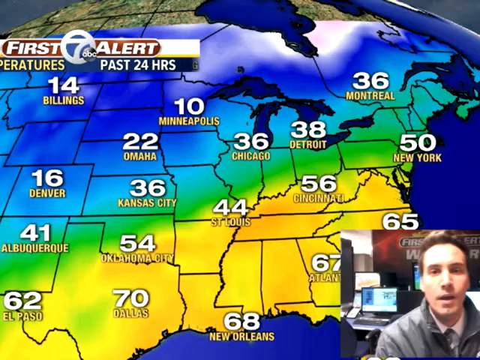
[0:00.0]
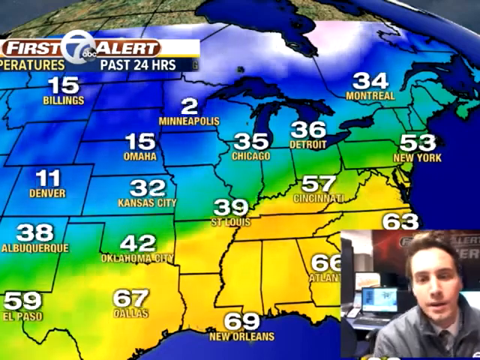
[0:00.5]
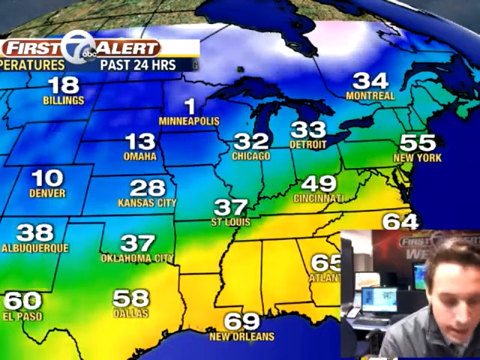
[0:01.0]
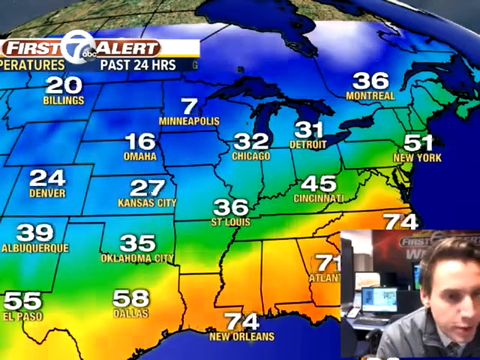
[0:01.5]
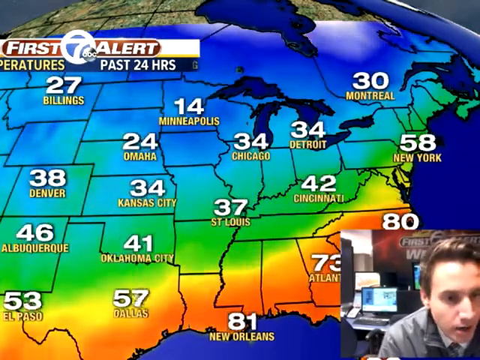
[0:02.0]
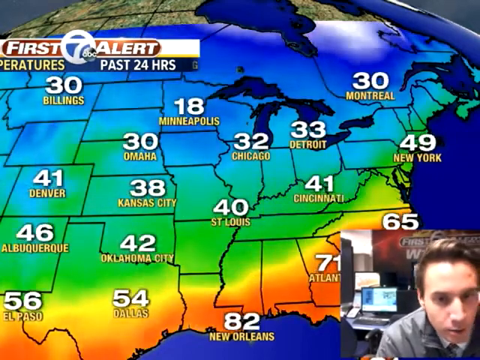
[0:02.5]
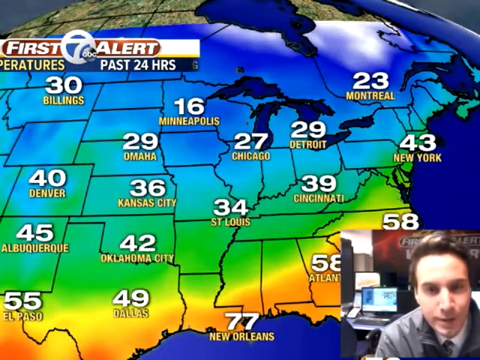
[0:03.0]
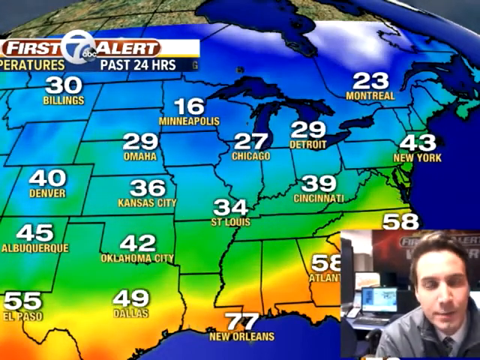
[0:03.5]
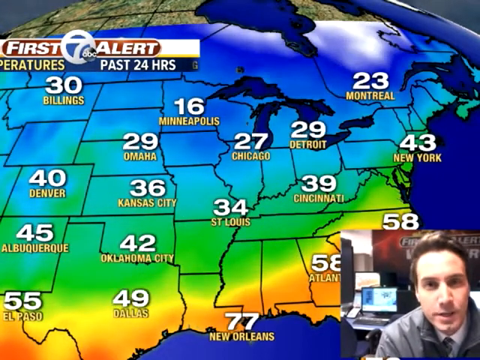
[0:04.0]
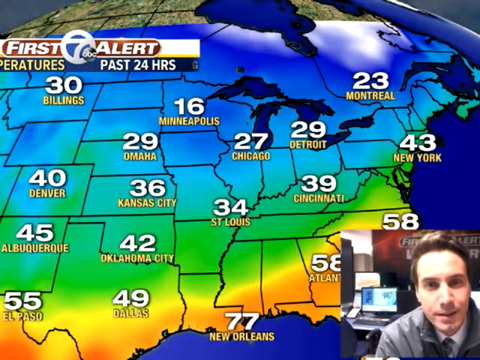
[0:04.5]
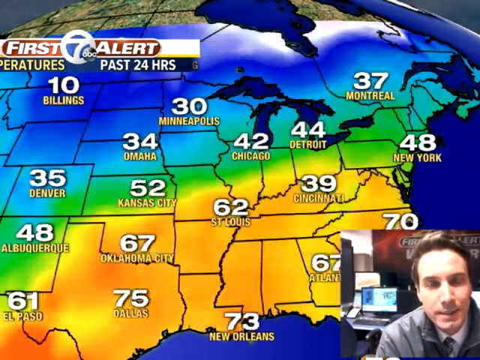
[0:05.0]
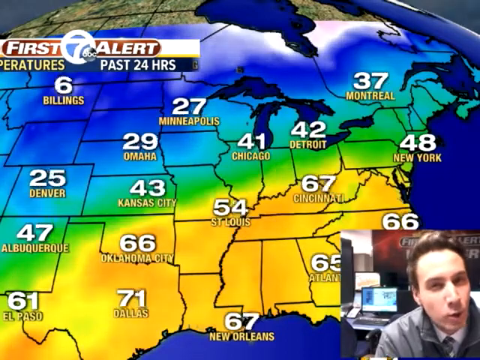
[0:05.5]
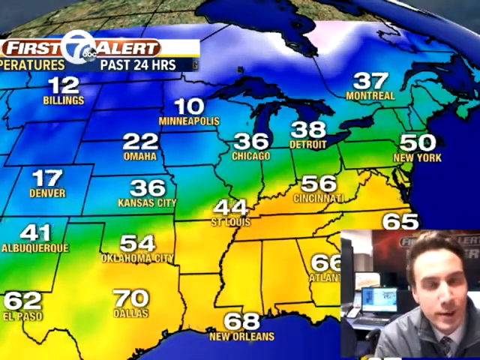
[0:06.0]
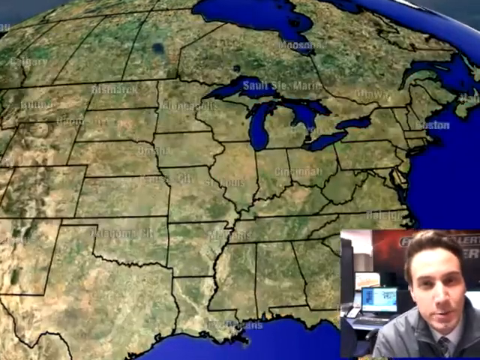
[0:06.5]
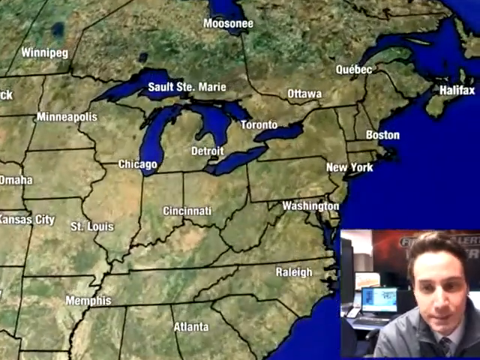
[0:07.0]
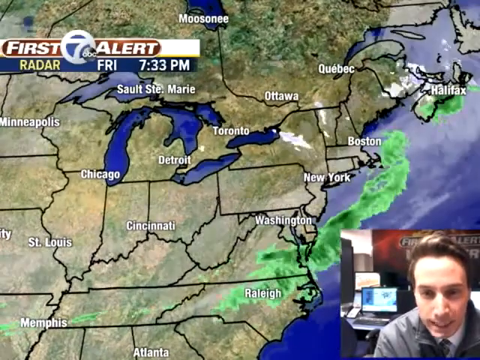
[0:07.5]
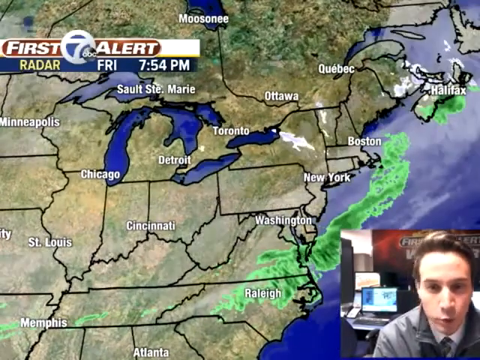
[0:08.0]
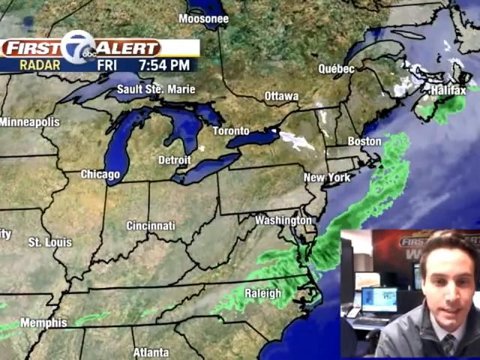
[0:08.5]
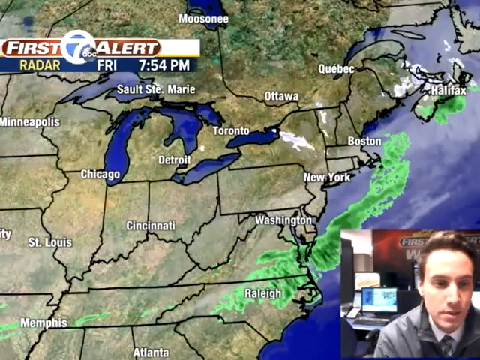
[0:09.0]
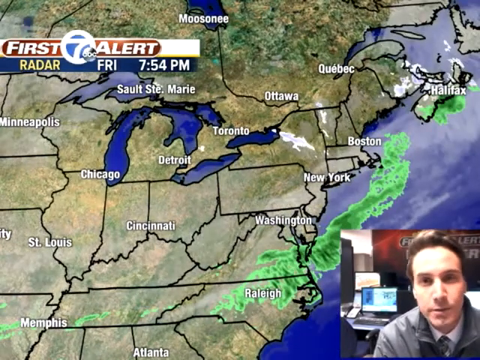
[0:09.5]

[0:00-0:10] A man in a navy blue tie and purple shirt reports the news. Temperatures for the past 24 hours are posted on the screen for several cities, including Billings at 14, Omaha at 22, Albuquerque at 41, St. Louis at 44, Montreal at 36, New York at 50 and Detroit at 38.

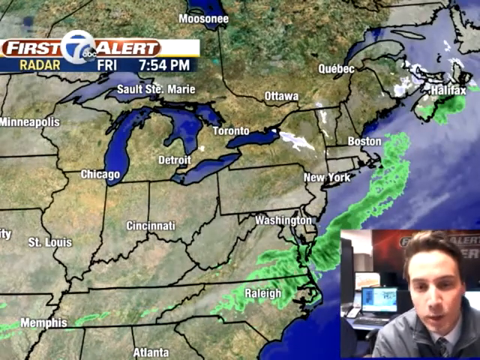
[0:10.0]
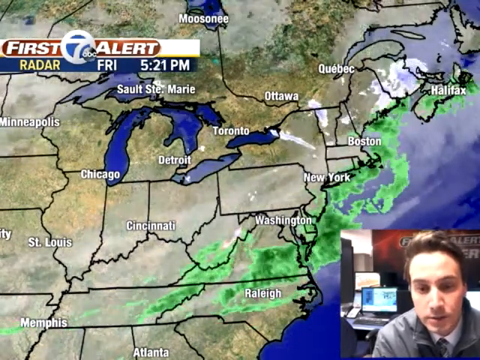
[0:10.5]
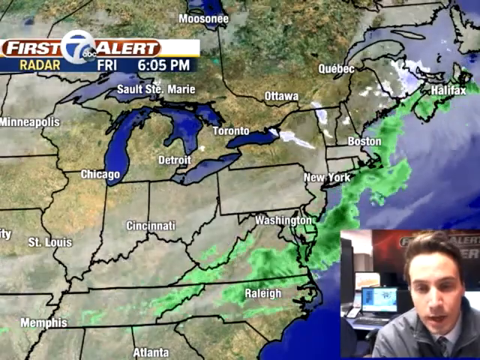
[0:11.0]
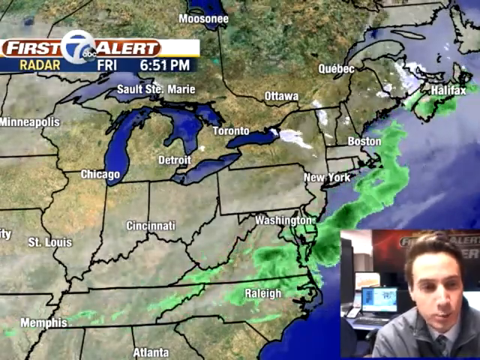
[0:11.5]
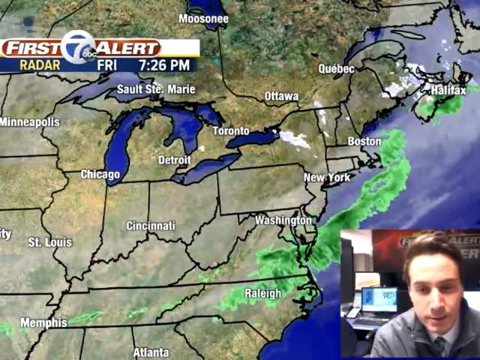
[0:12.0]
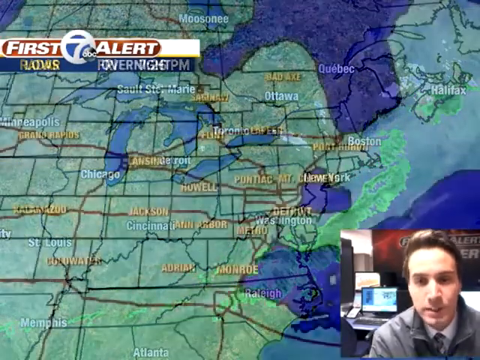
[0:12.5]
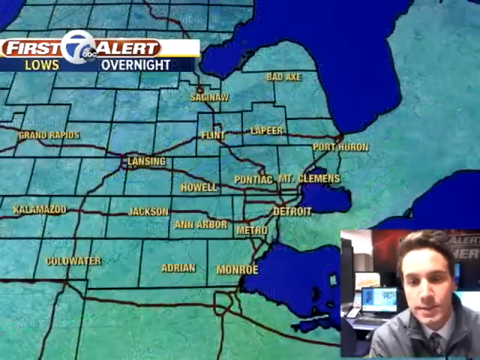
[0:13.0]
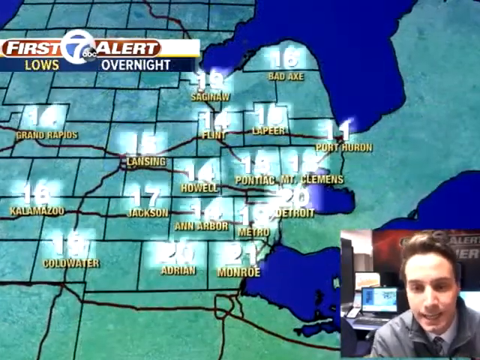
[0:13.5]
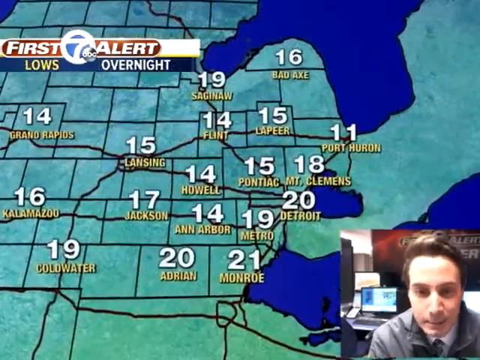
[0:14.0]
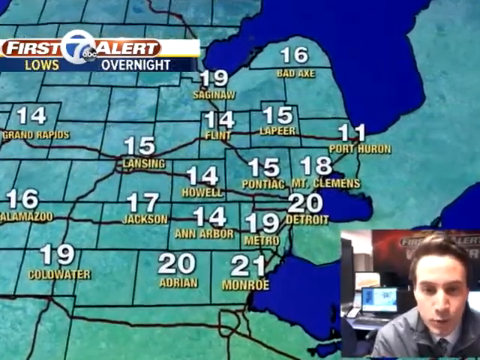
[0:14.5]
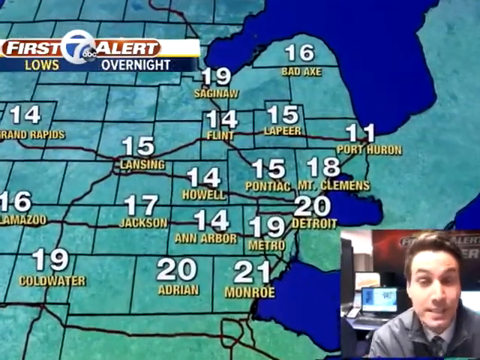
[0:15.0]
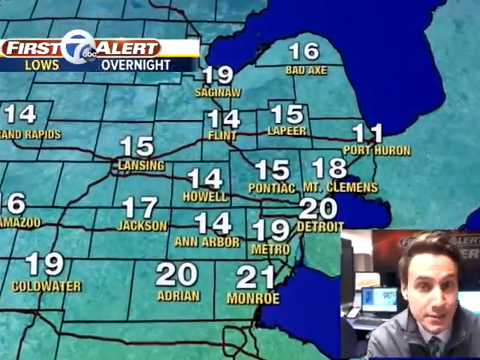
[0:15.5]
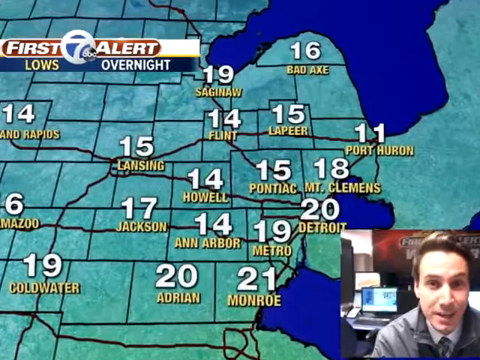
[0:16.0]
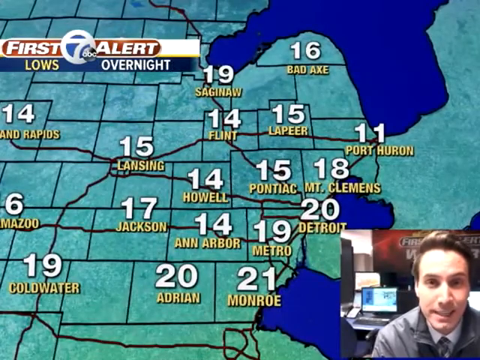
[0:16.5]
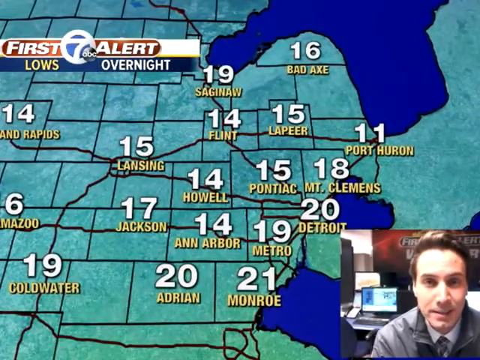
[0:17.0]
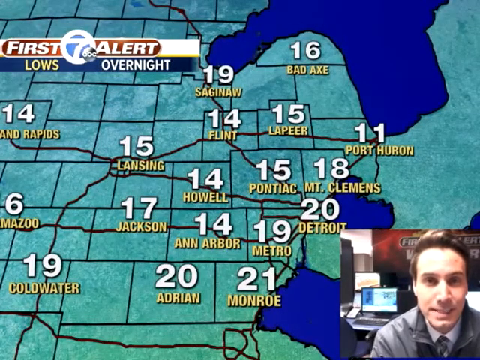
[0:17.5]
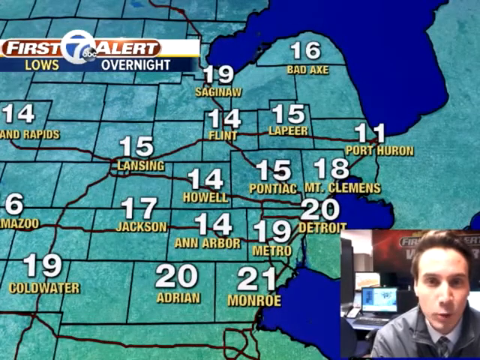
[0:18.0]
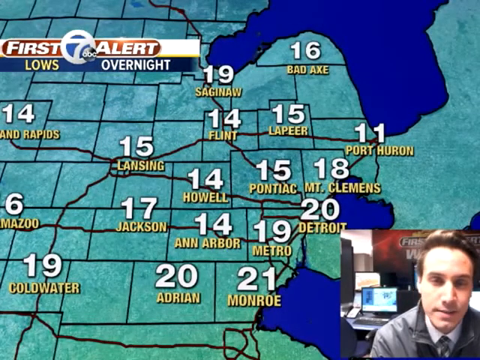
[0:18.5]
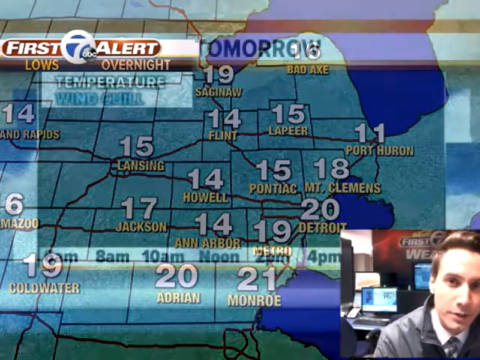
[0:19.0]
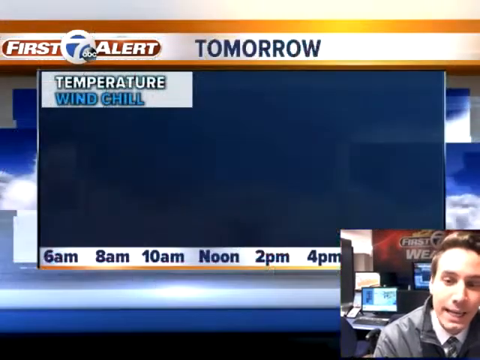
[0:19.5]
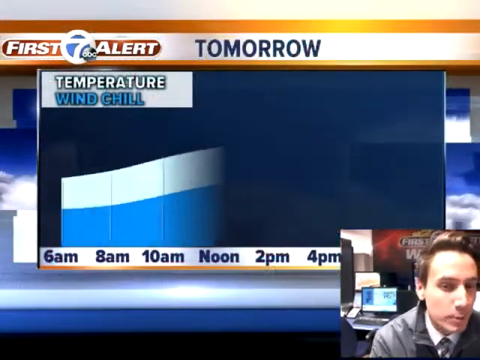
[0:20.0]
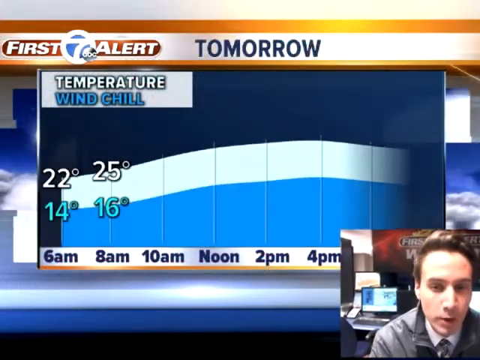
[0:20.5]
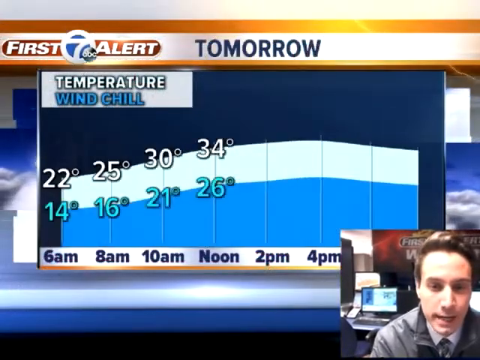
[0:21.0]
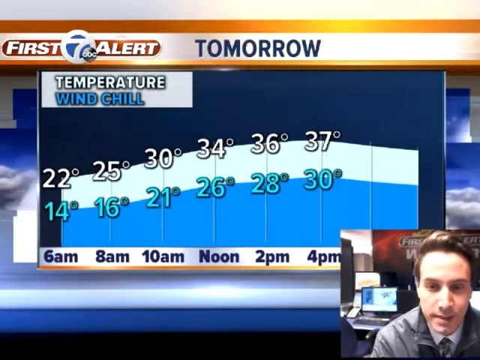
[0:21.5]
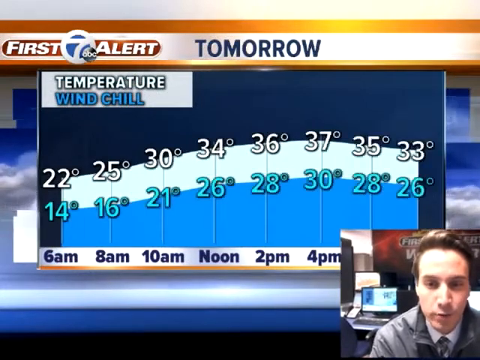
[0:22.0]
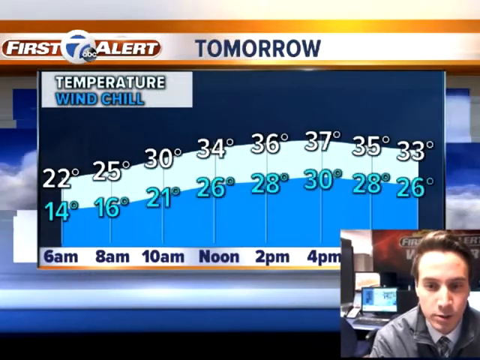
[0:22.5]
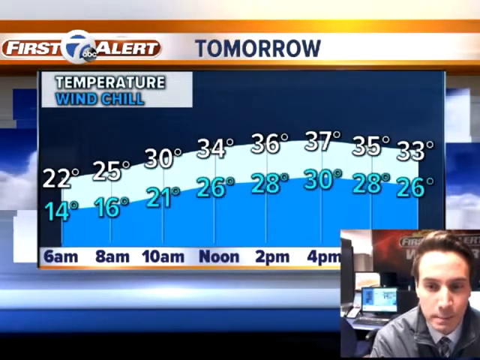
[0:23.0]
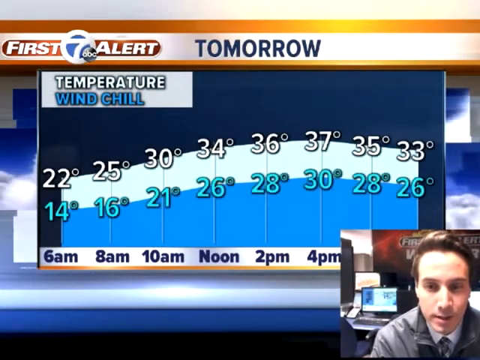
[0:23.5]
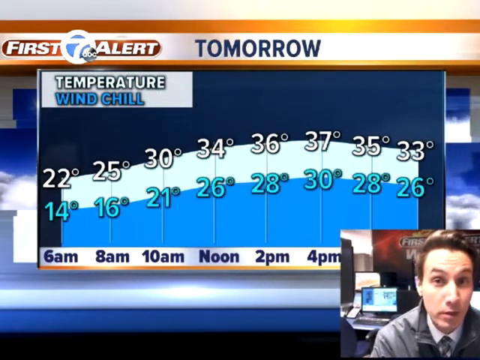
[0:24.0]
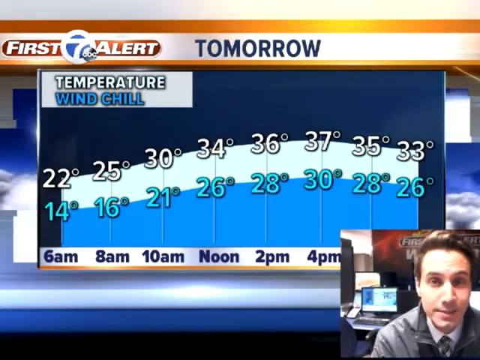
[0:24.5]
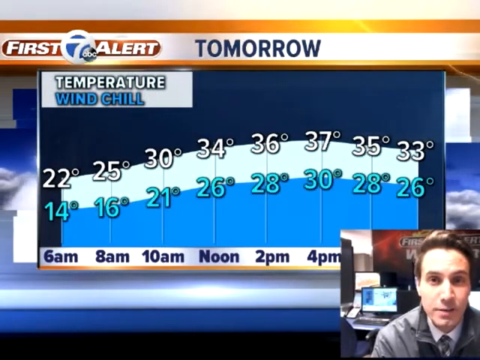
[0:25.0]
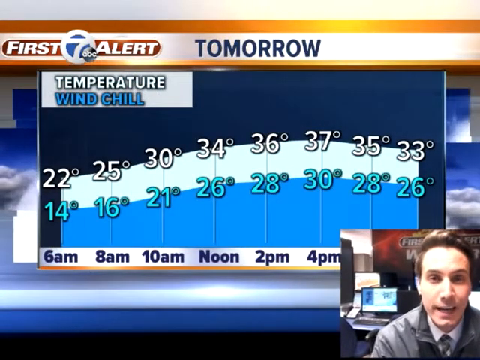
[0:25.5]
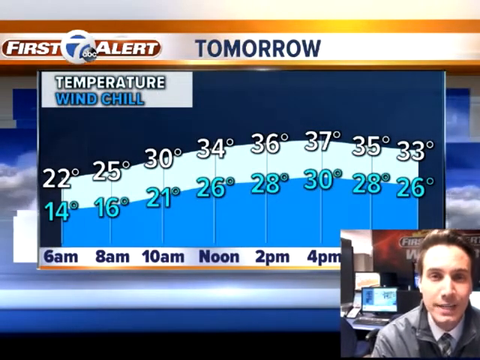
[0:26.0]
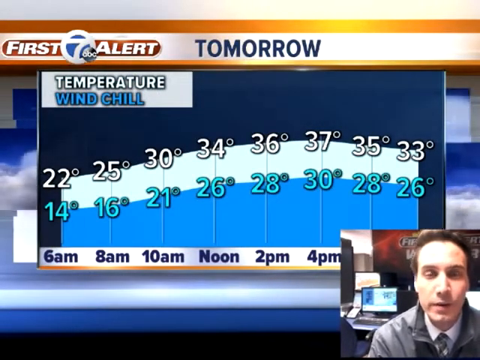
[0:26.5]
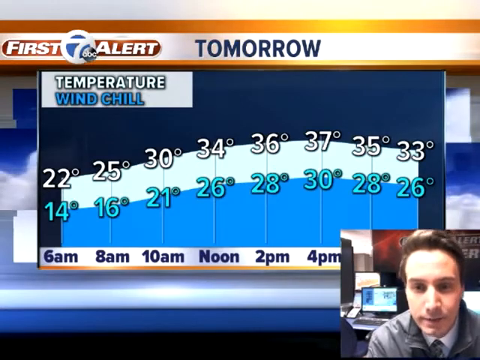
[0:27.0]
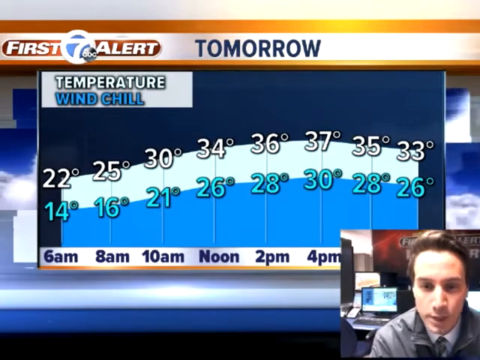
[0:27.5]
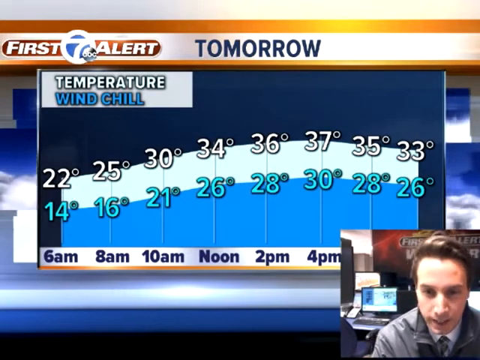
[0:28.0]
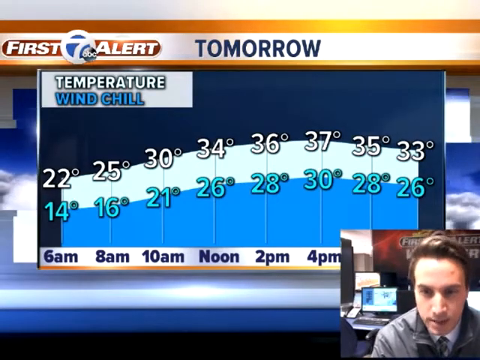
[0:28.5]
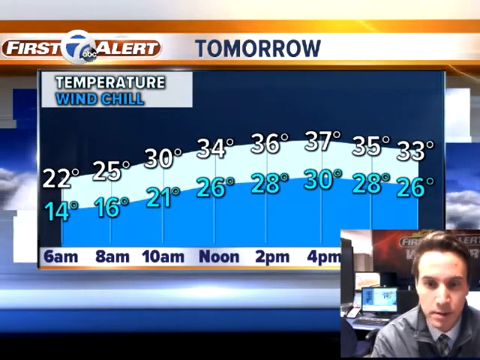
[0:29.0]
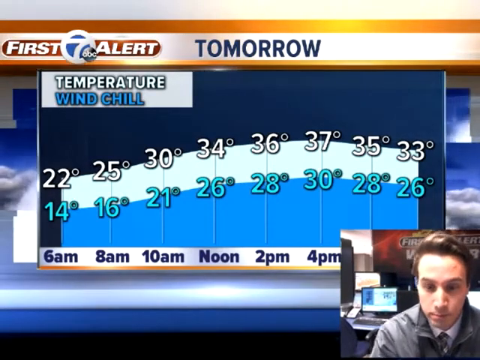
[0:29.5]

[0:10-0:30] A man in a bow tie and purple shirt reports the news while the past-24-hour temperatures for cities are shown, including Billings at 14, Omaha at 22, Albuquerque at 41, St. Louis at 44, Montreal at 36, New York at 50 and Detroit at 38. An hourly forecast follows: 6 a.m. at 14, 8 a.m. at 16 and 10 a.m. at 21, rising to 26 and then 28 at 2 p.m.